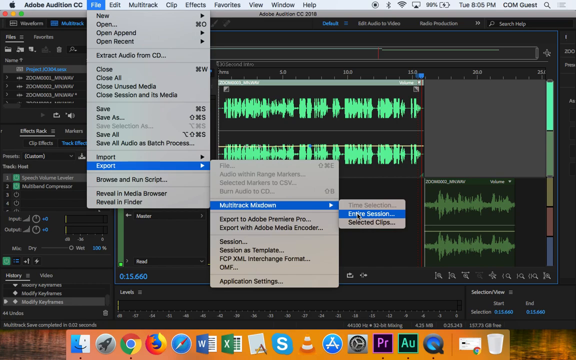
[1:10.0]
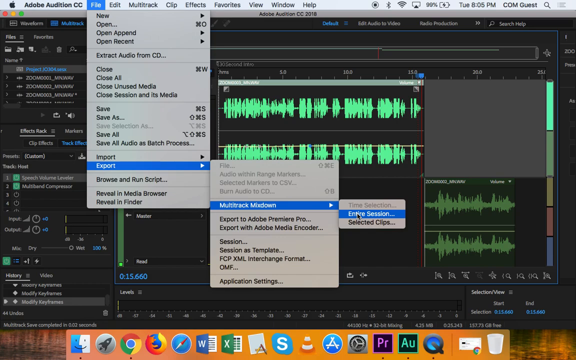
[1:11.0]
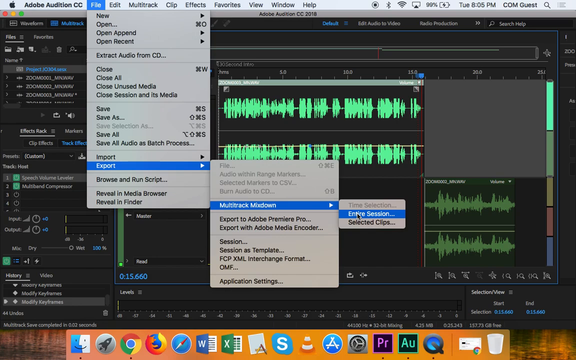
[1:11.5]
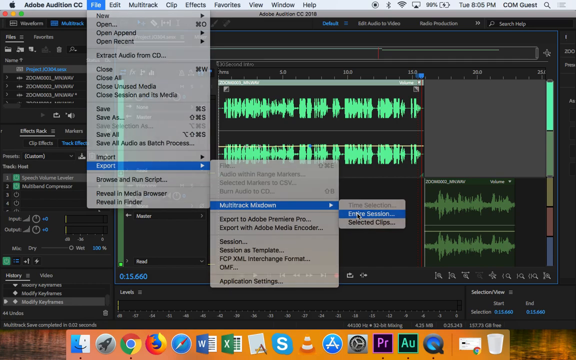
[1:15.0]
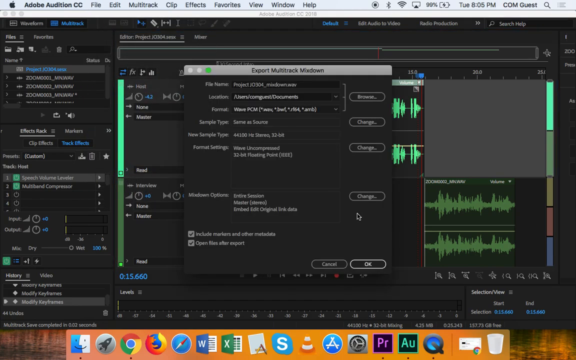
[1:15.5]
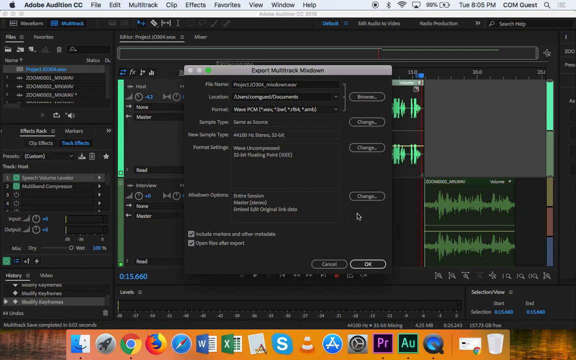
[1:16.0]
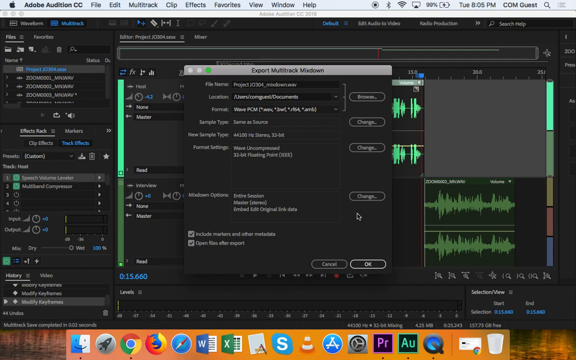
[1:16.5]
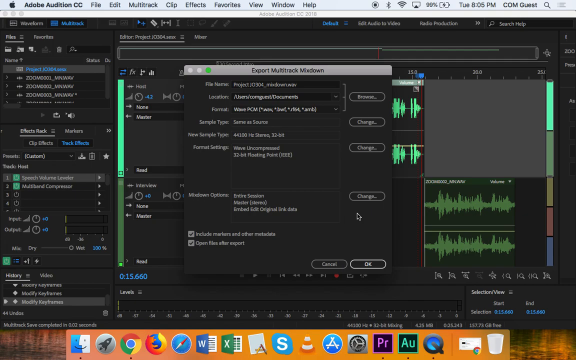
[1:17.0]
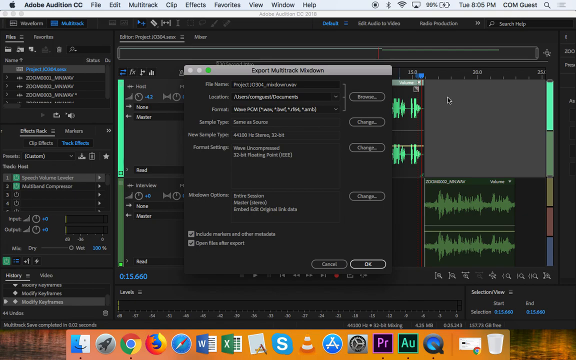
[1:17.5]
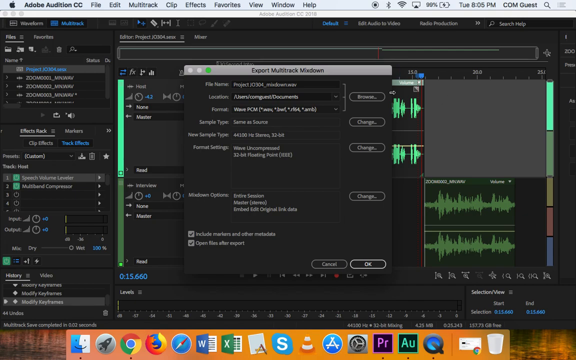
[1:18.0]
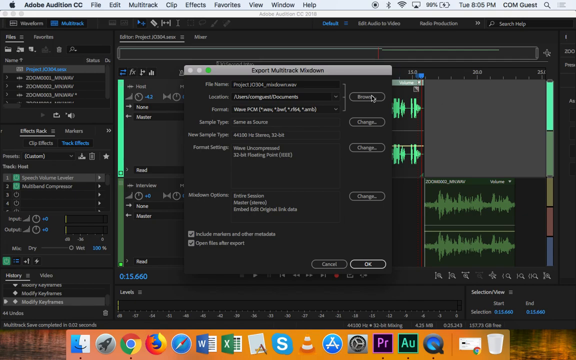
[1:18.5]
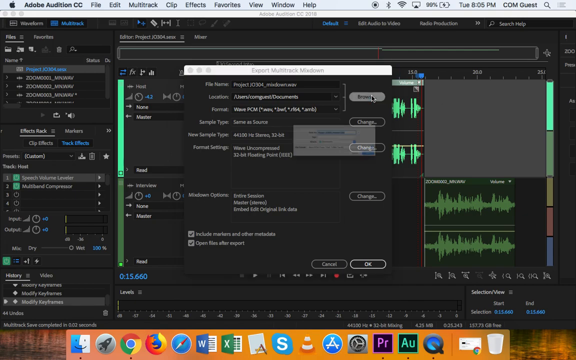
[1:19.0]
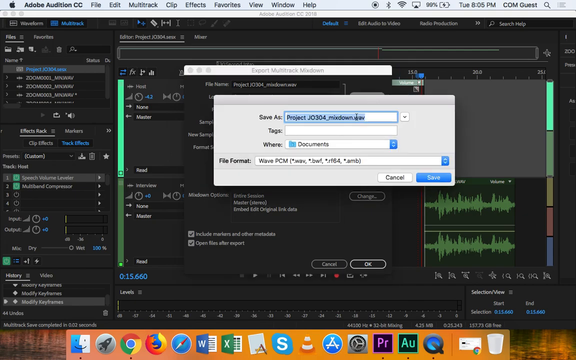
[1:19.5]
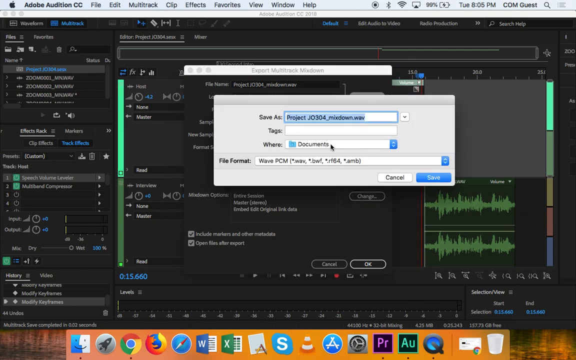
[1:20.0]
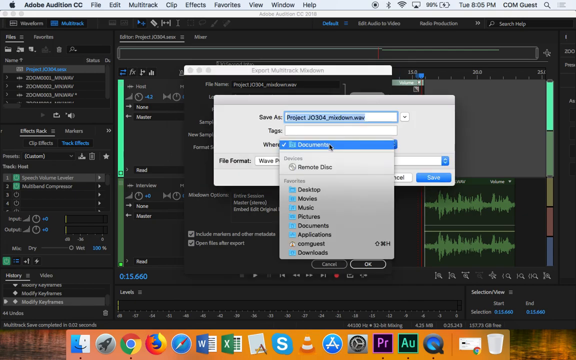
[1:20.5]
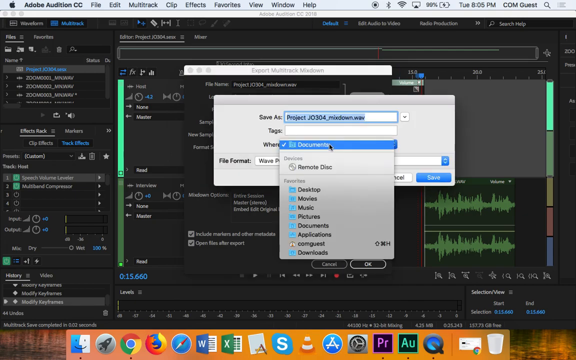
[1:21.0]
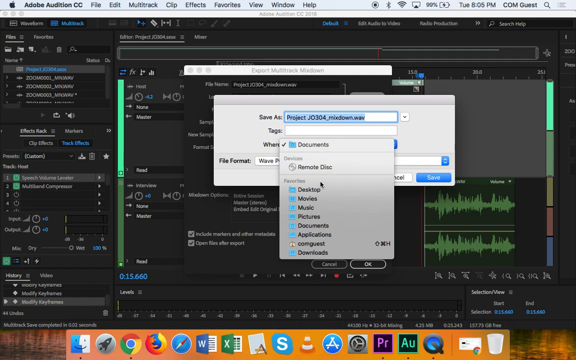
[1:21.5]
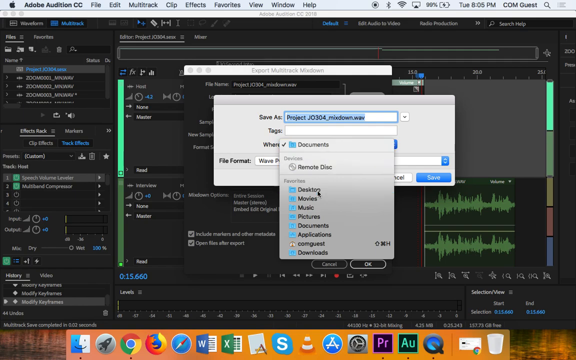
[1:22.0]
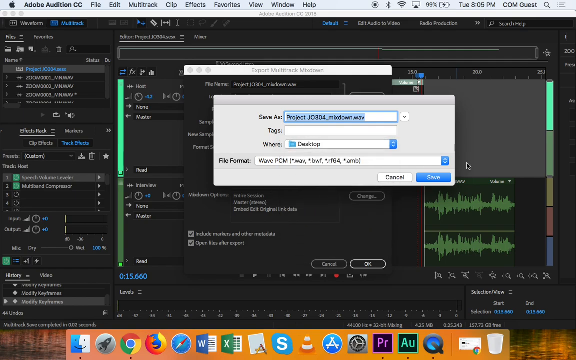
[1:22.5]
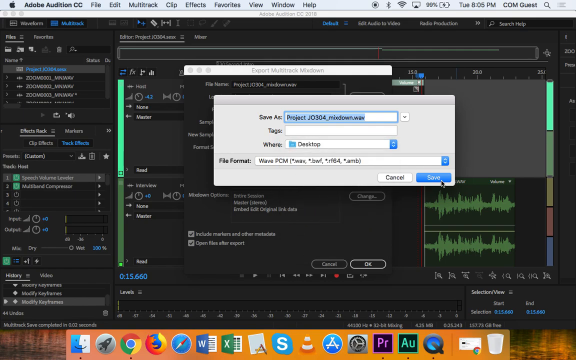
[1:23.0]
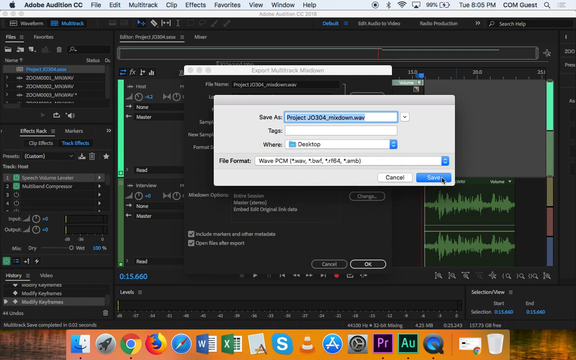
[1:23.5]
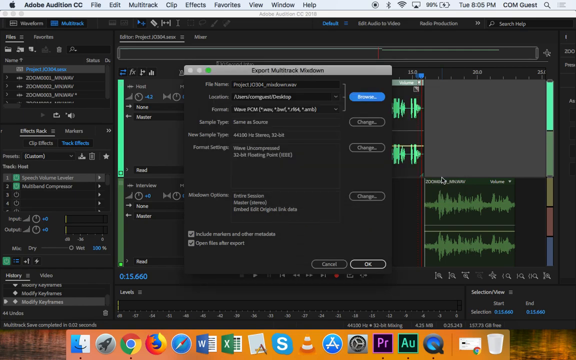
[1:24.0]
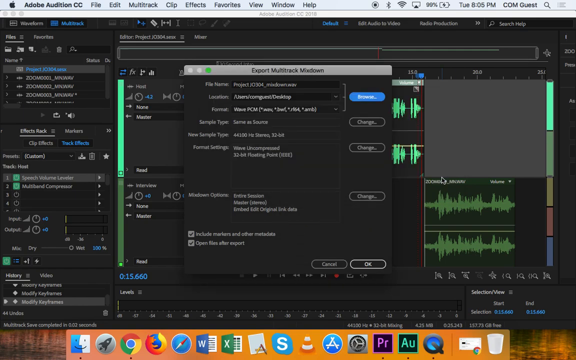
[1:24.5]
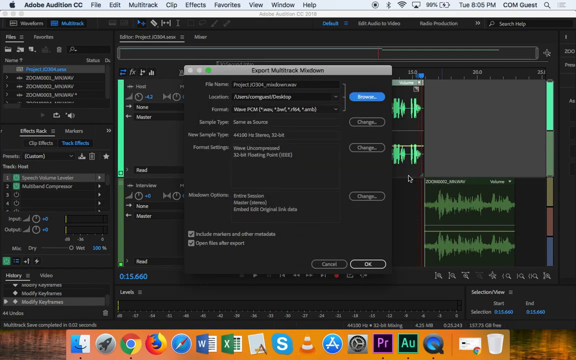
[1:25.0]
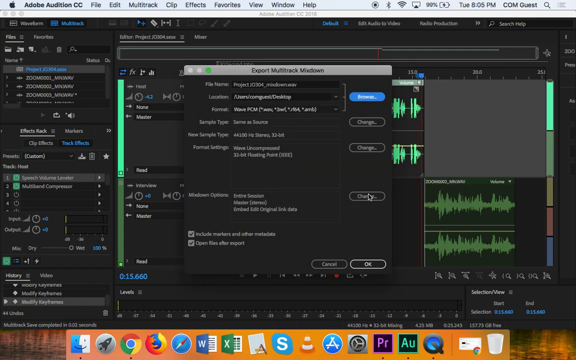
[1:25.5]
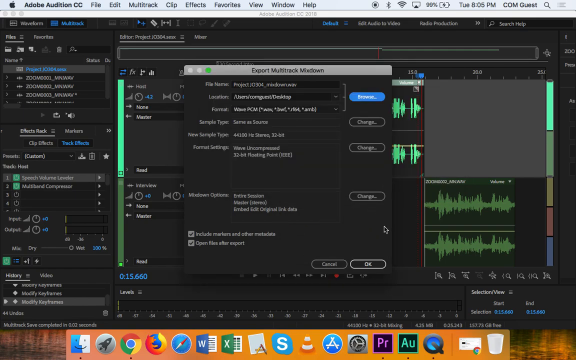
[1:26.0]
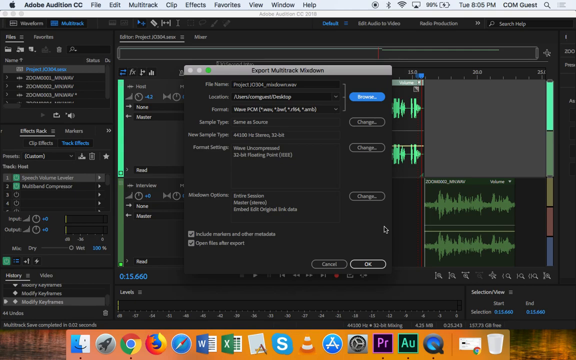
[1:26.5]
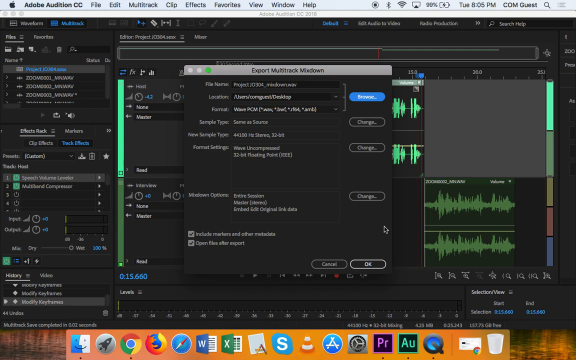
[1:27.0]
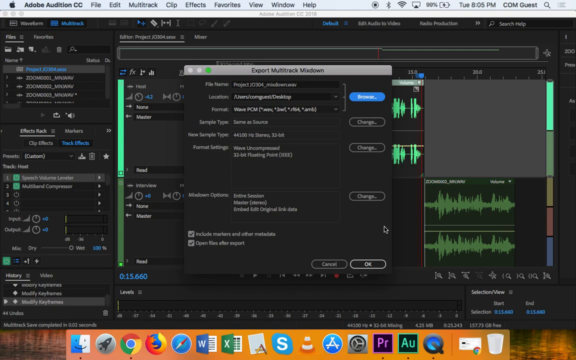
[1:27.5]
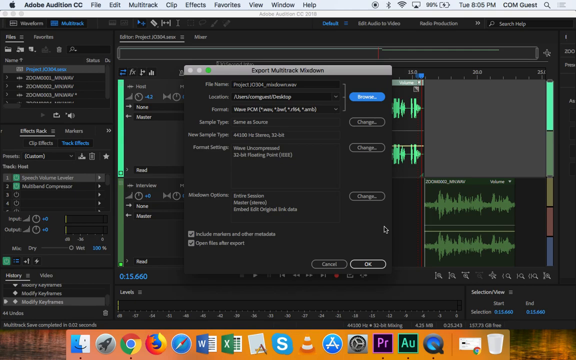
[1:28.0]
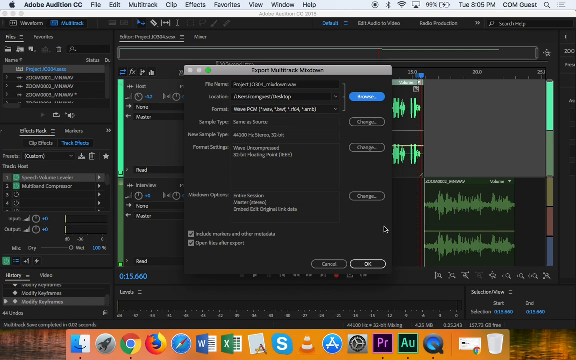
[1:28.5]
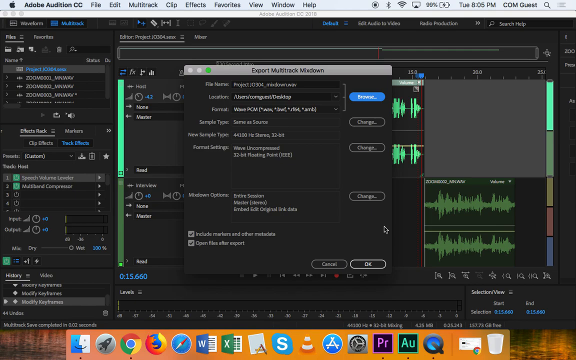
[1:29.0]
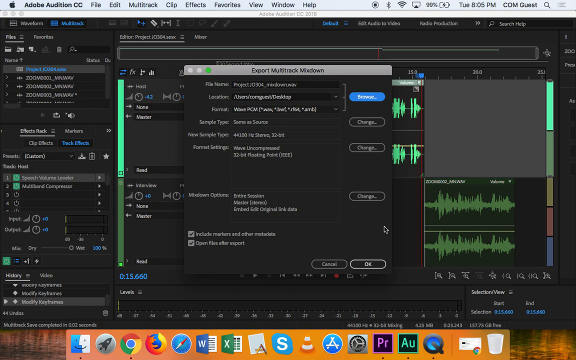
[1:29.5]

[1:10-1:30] In Adobe Audition CC, the File menu is open with File selected in blue. Export has been selected, opening a side menu, and Multitrack Mixdown has been clicked, opening an additional menu. The mouse hovers over Entire Session in the new menu, turning it blue, and rests there for multiple seconds before clicking it. A new window opens reading "Export Multi-Track Mixdown", with various options: at the very top it reads "File Name", then "Location", "Format", "Sample Type", "New Sample Type", "Format Settings", "Mixdown Options", along with various check boxes. The user clicks a Browse button next to the Location option, which opens a new window with various text boxes; the top box reads "Project J0304_Mixdown.WAV". They click a drop-down menu reading "Where", which shows various locations in the folders on their computer, move the mouse down to Desktop, and click Save.